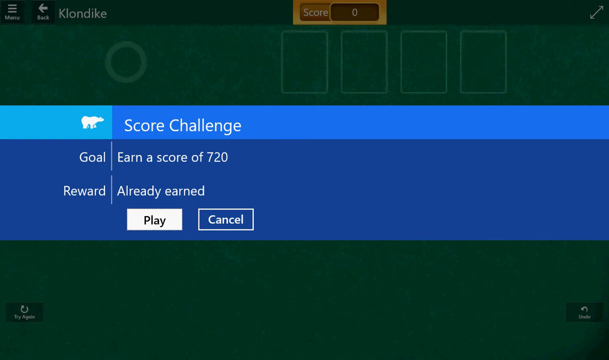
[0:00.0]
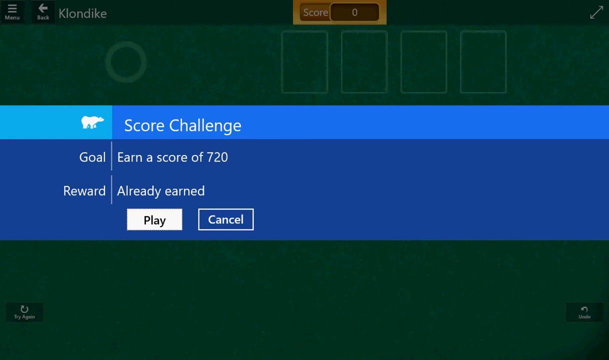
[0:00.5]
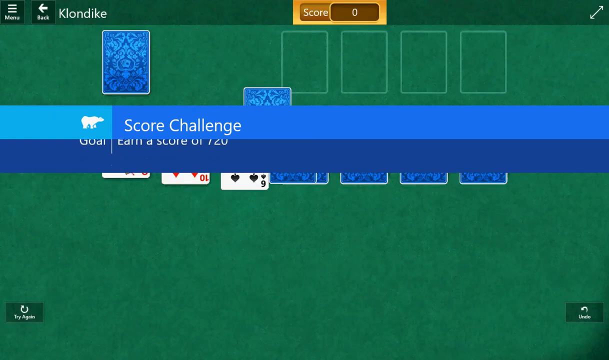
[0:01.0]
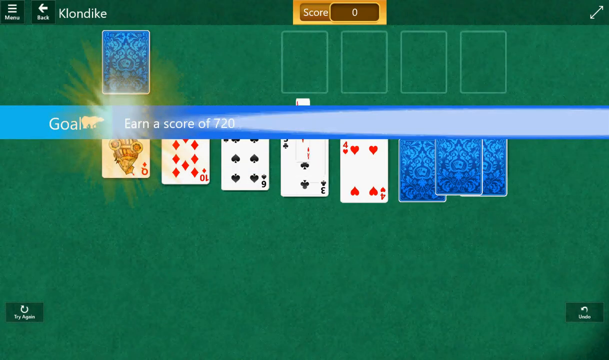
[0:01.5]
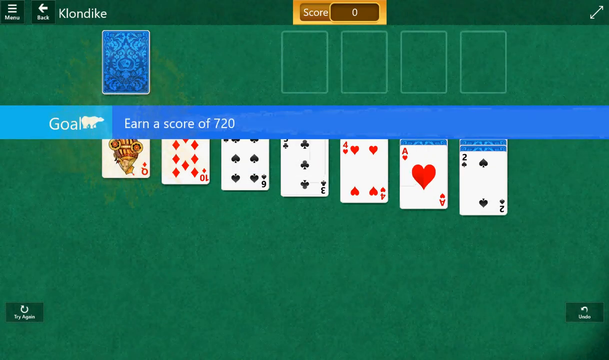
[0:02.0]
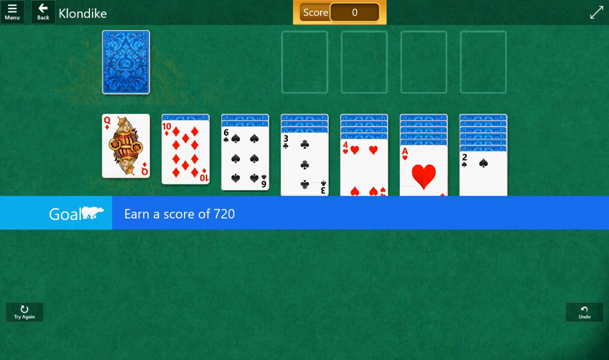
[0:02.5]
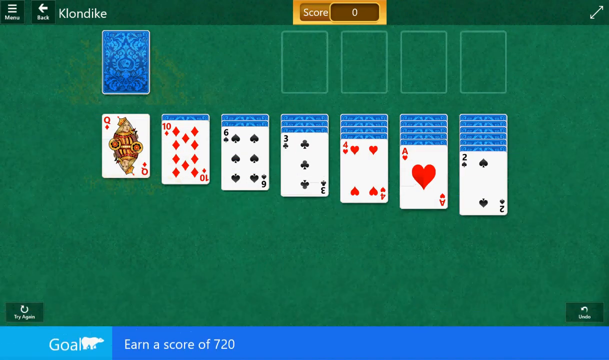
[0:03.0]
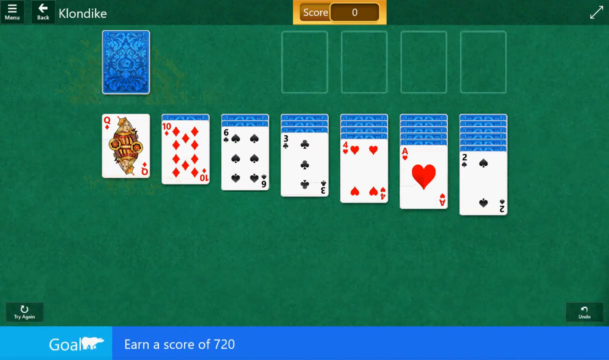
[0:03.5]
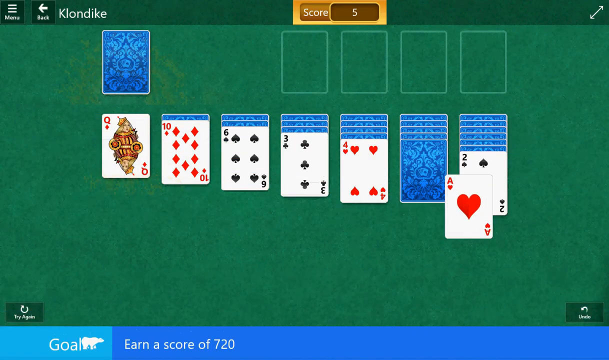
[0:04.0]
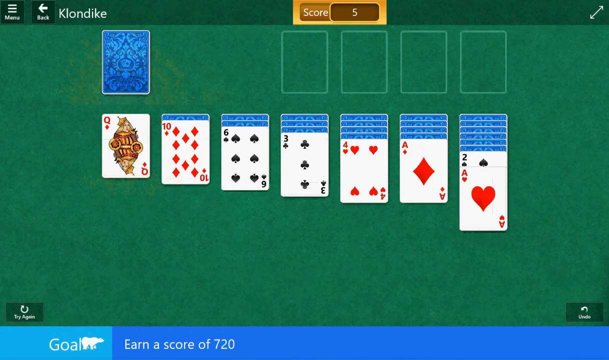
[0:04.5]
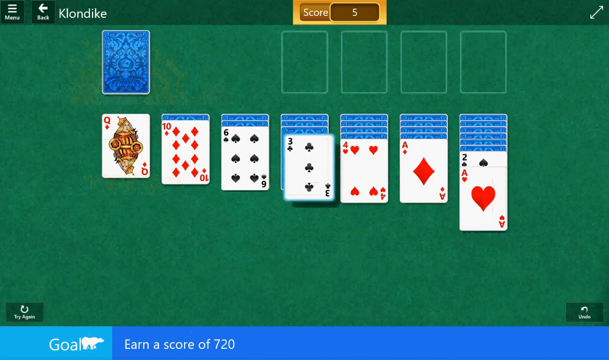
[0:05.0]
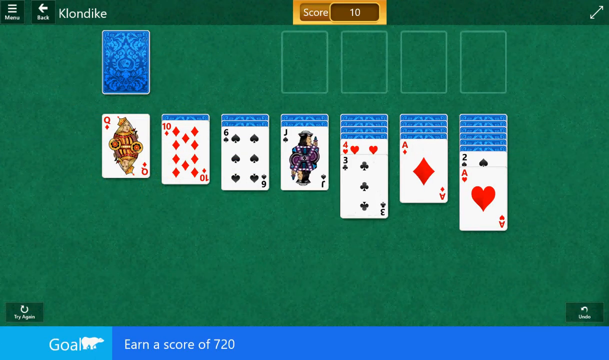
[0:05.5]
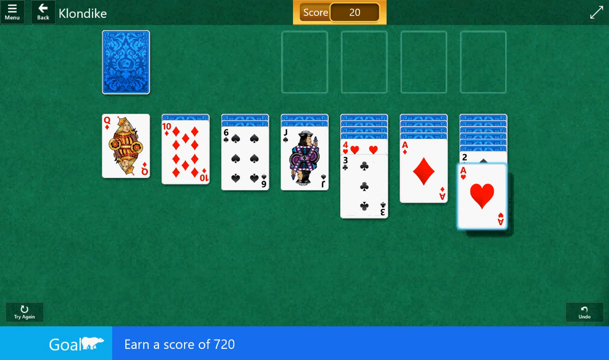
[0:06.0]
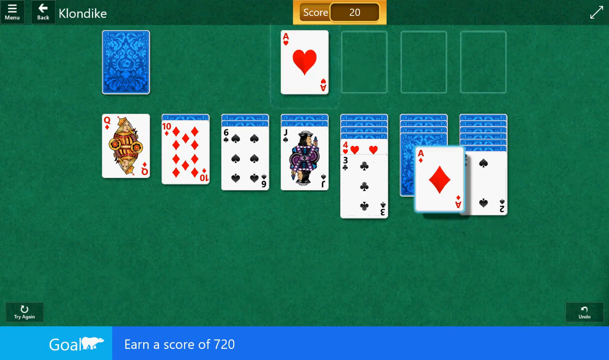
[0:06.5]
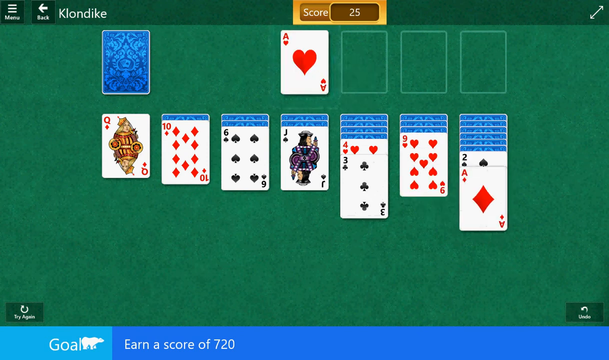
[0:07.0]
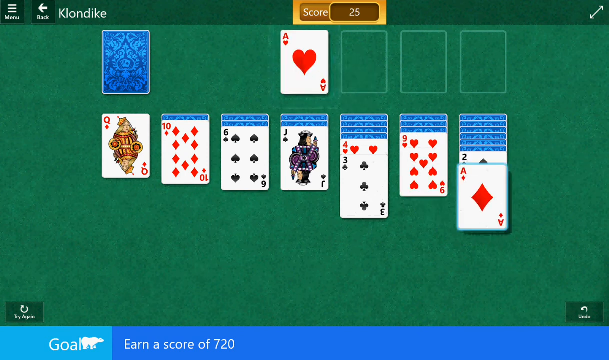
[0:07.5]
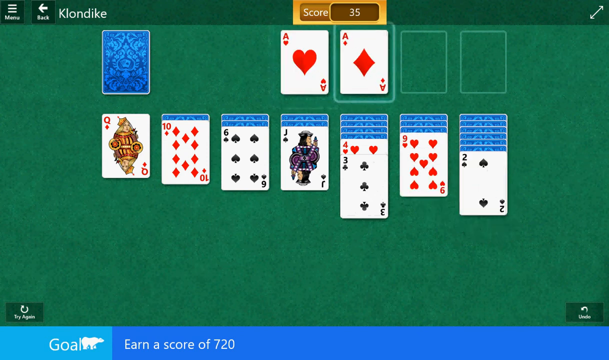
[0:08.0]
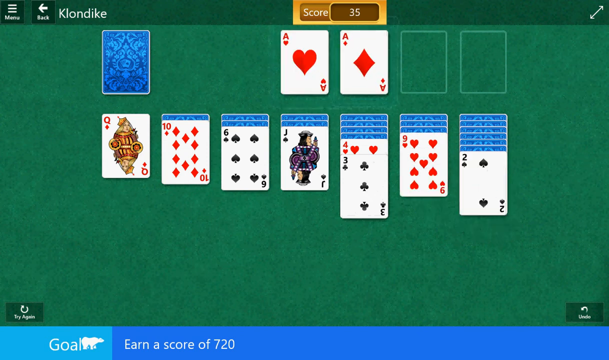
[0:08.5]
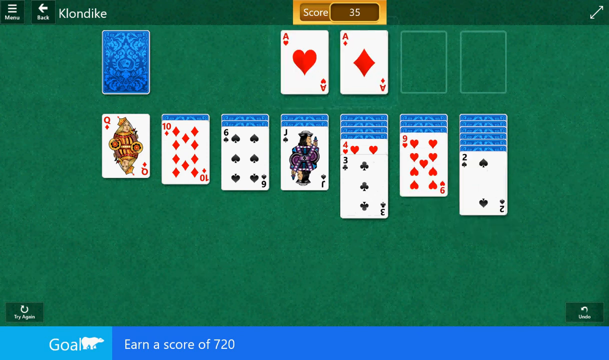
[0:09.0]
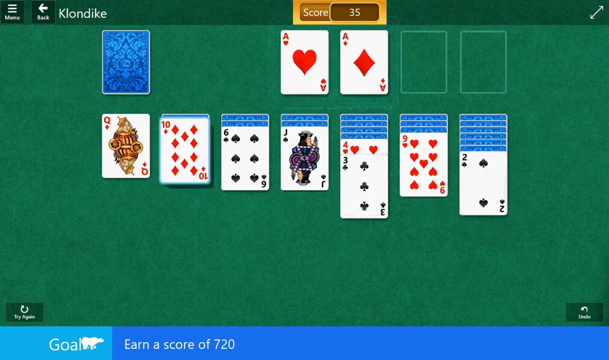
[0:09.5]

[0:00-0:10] The video opens on a computer game page with text at the top reading "score challenge", "goal, earn a score of 720", and "reward already earned". Below are two buttons, one labeled "play" and the other "cancel". As the game starts, it is a solitaire game: an ace is moved over to a two and then moved up. The score starts at 5, then goes to 10, 20, 25, 30, and reaches 40. The ace of hearts and the ace of diamonds are put up, while the other aces have not yet been found. Among the cards in play are a queen of diamonds, a ten of diamonds, a six of spades, a jack of clubs, and various other cards.